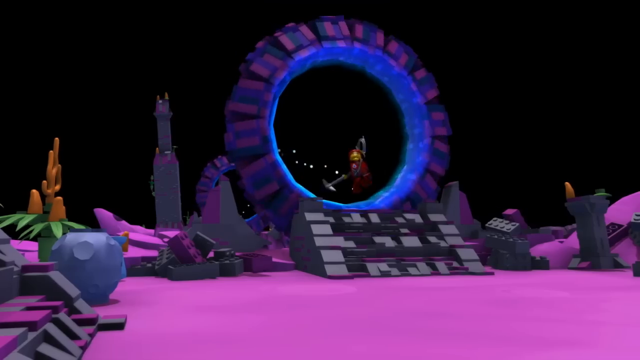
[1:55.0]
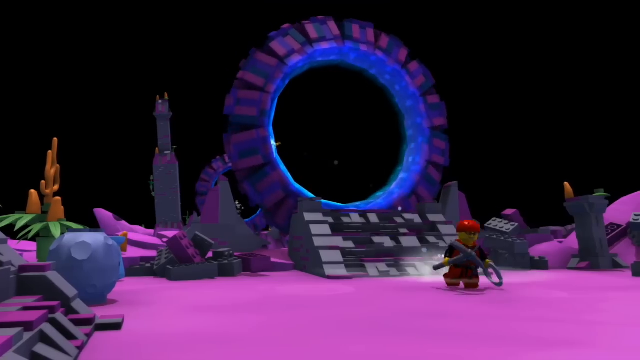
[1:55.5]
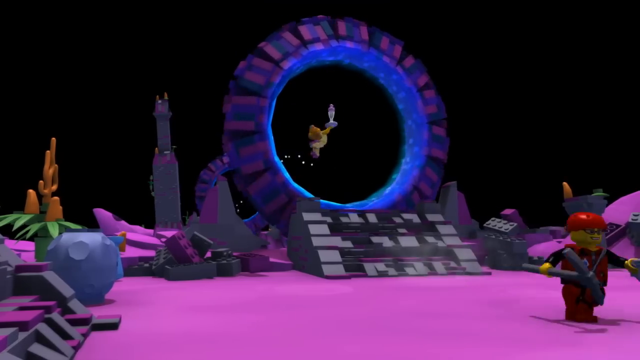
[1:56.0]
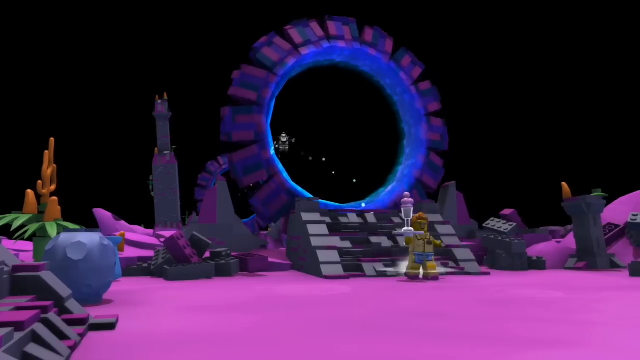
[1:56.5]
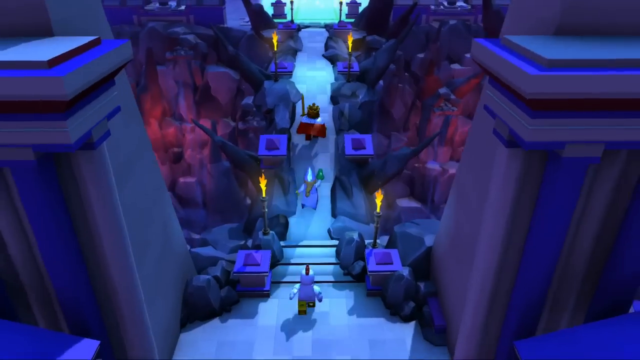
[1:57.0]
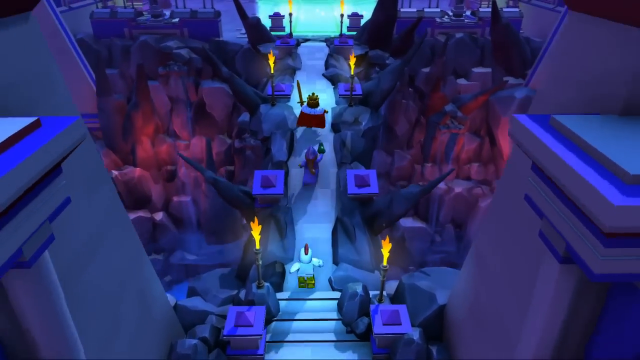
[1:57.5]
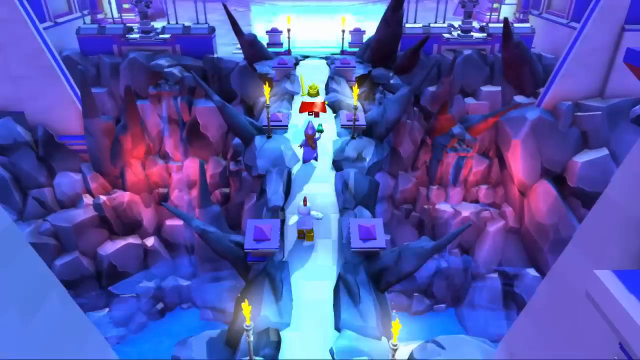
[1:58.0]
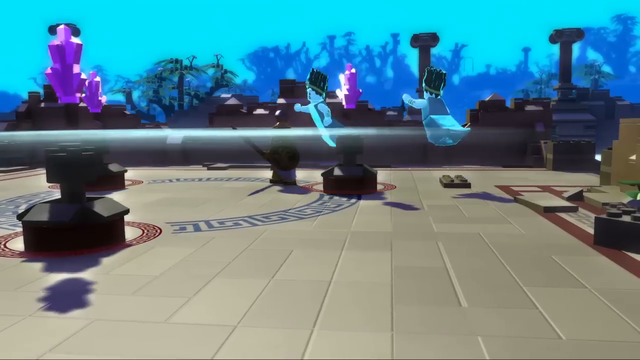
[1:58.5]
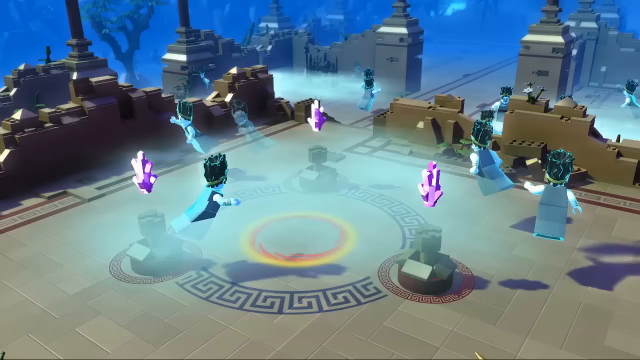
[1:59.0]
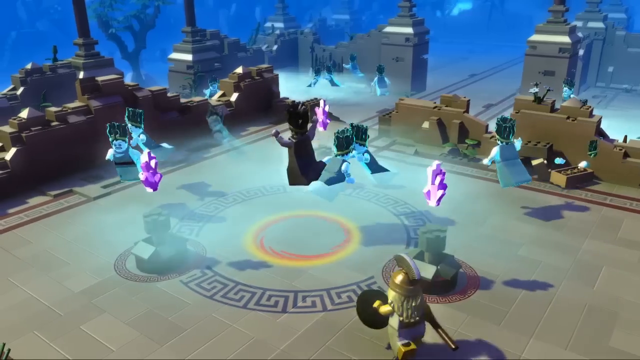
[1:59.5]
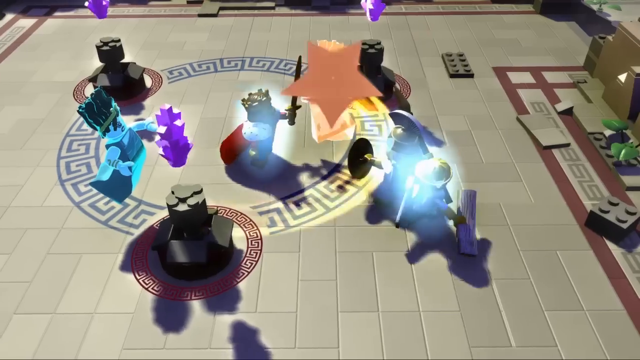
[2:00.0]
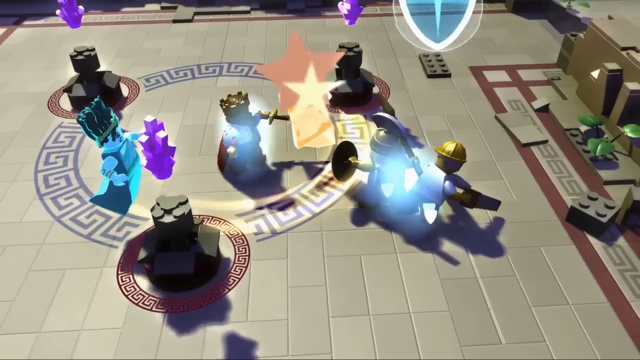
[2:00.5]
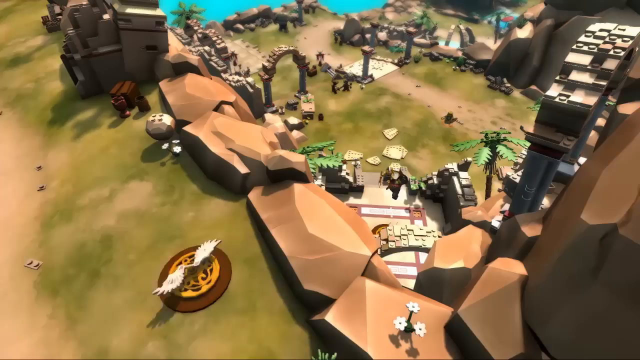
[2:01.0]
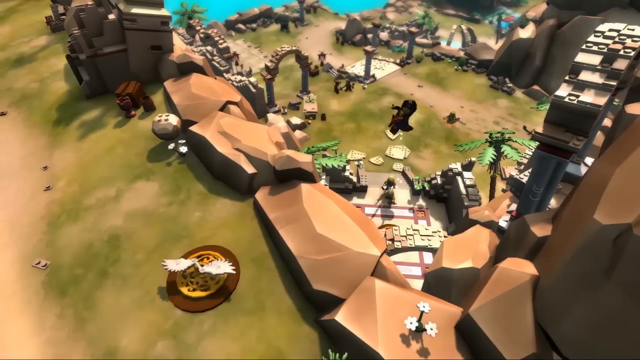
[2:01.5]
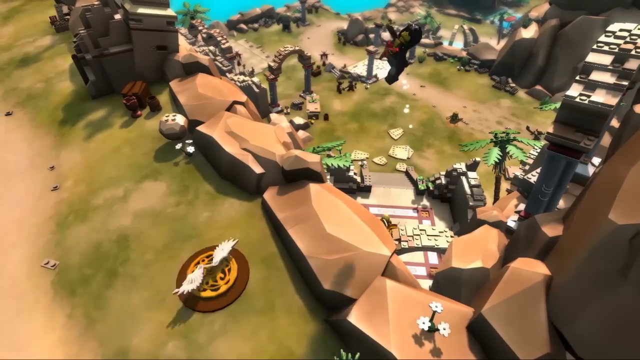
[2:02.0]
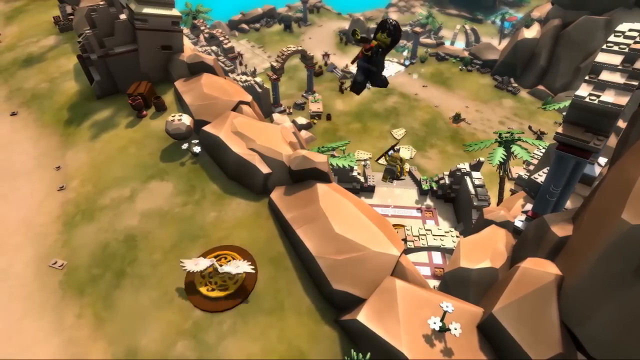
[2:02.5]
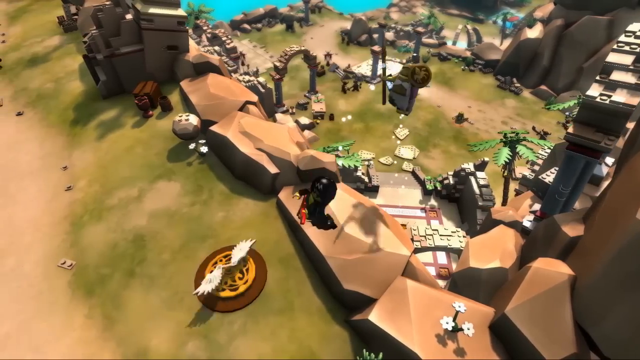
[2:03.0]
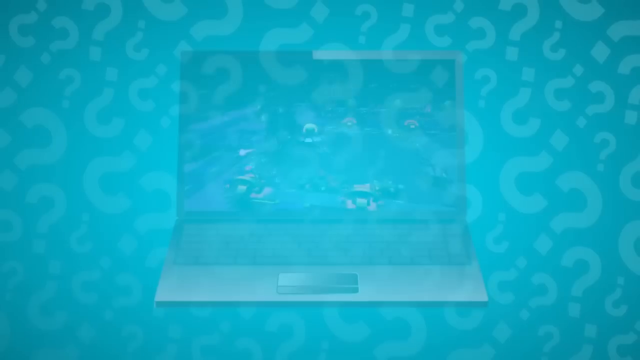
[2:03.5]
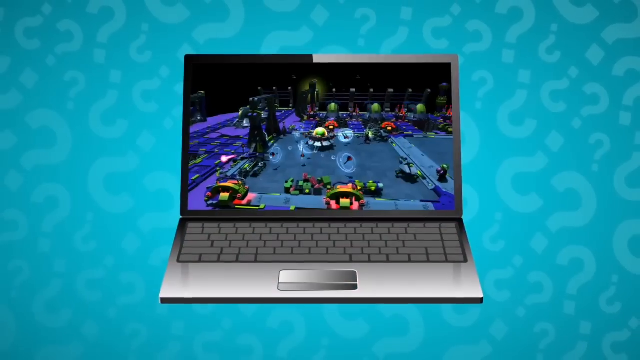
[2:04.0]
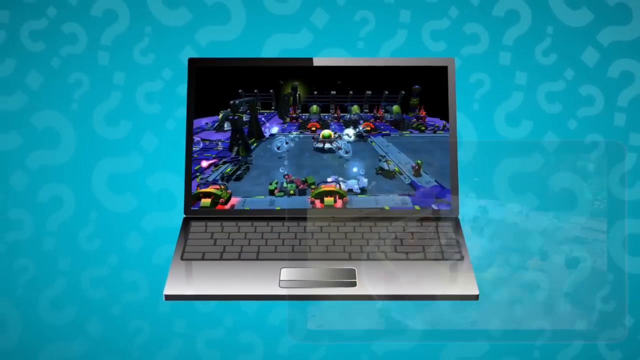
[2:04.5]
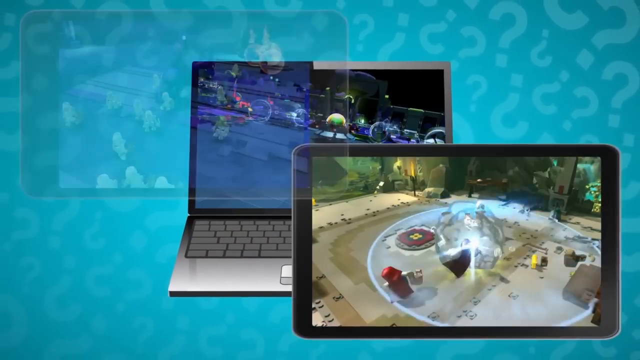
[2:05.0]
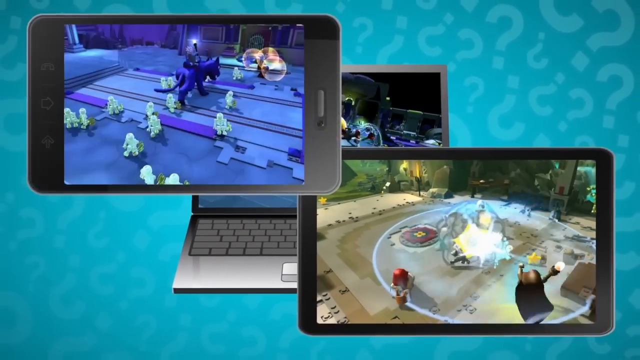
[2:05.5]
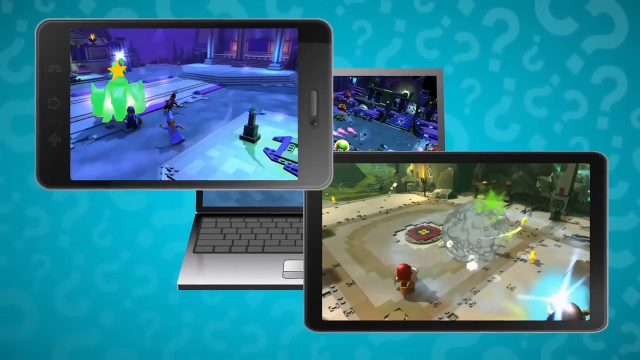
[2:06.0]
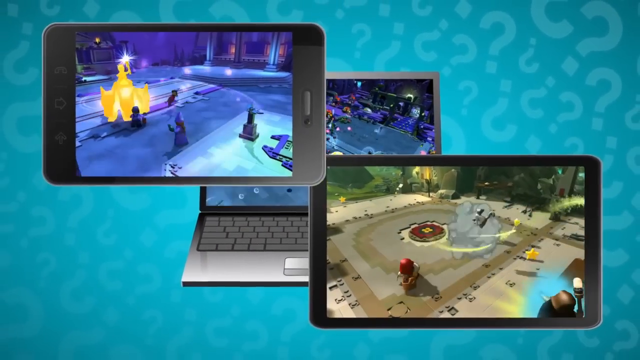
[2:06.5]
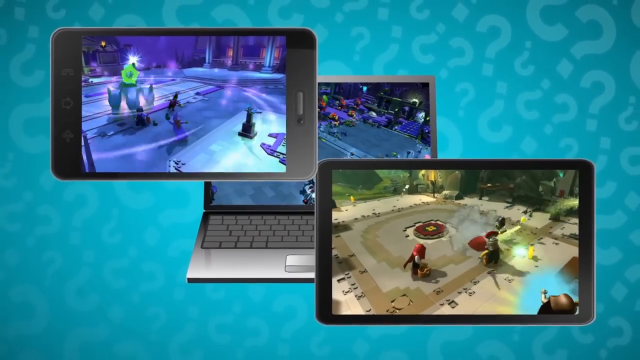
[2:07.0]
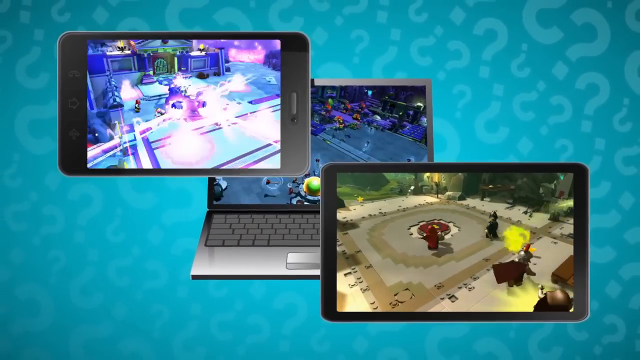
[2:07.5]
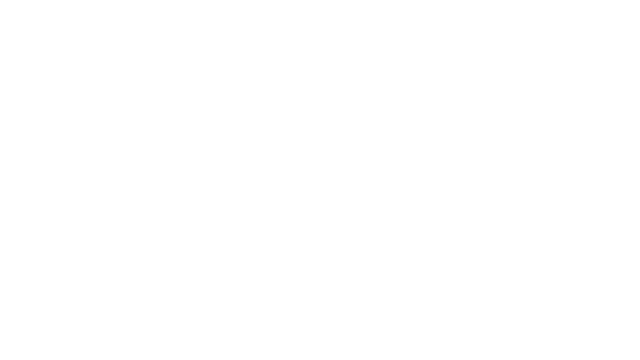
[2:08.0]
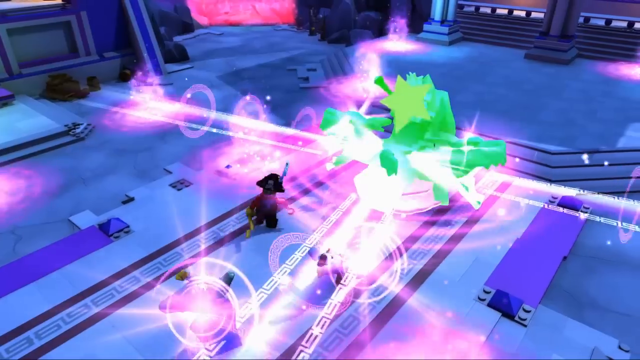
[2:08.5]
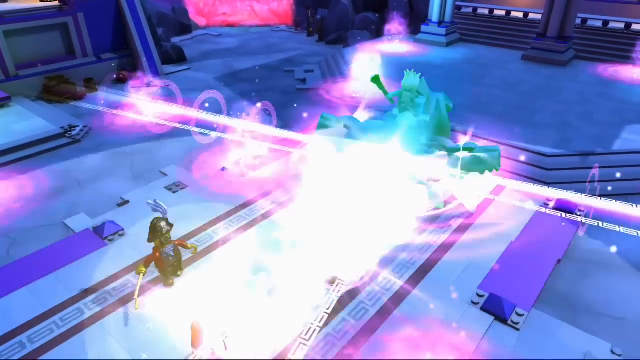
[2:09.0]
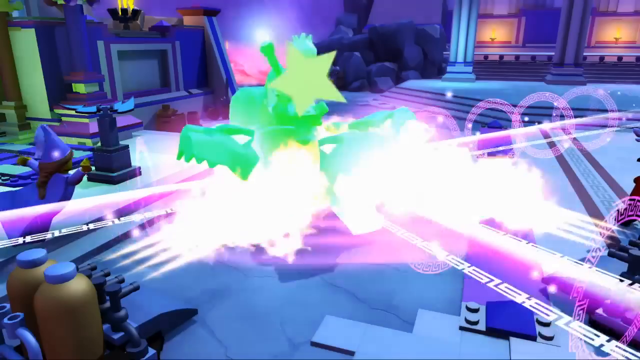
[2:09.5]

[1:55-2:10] Other characters come out of the other side of the purple and blue ring, walking down five gray steps. From a bird's-eye view, three characters run across a bridge lit with fire in a sort of menacing, cave-like area. Turquoise ghosts fly around over ground with some sort of tribal print; there are many ghosts, with a differently dressed ghost in the center. A different shot shows many characters warding off enemies, one dressed like a classic king in a red cape and gold crown. An outdoor setting shows people jumping, with terracotta-colored rocks and palm trees. The turquoise screen returns with different images of laptops, tablets and iPhones showing the game. The camera zooms into the phone screen, which shows a purple and green fighting scene.